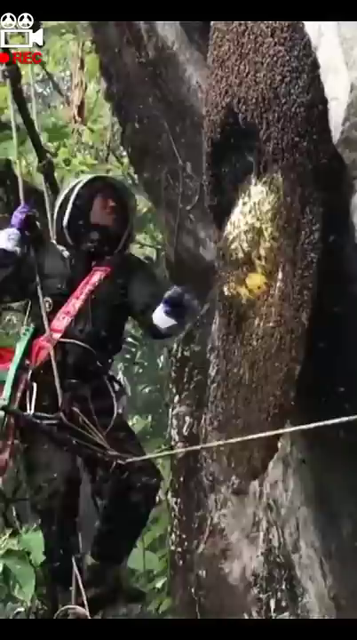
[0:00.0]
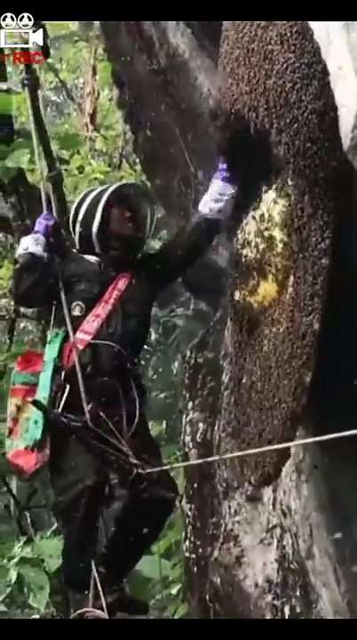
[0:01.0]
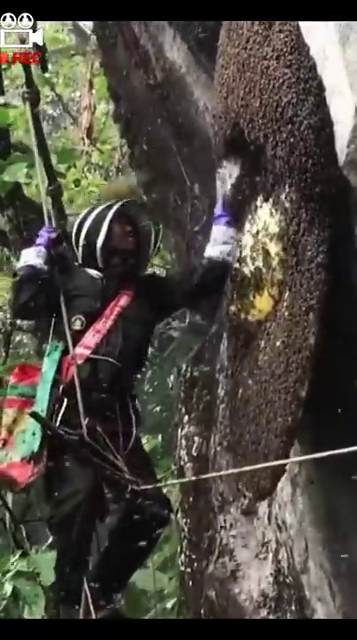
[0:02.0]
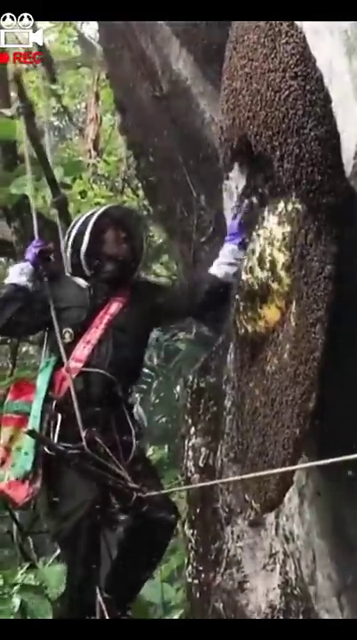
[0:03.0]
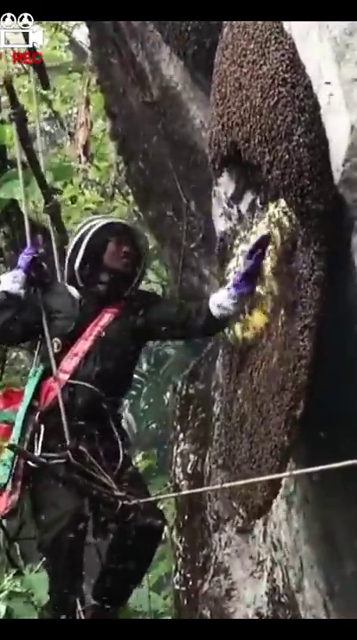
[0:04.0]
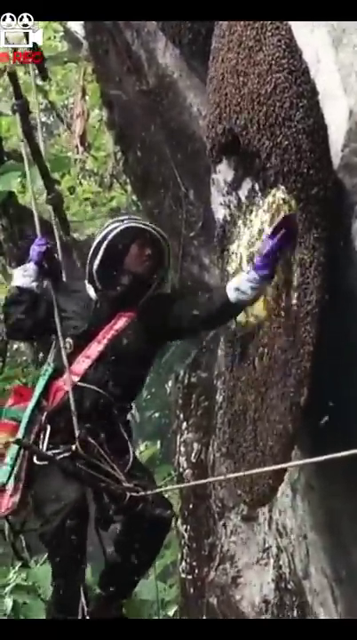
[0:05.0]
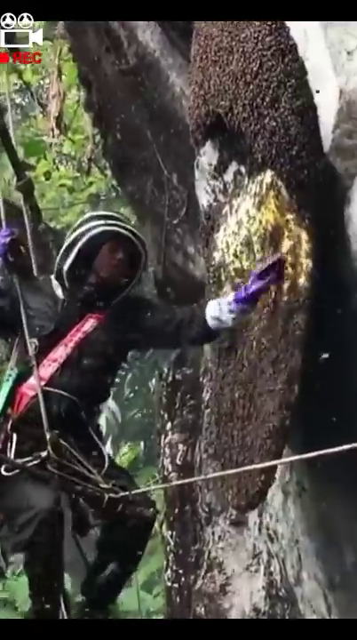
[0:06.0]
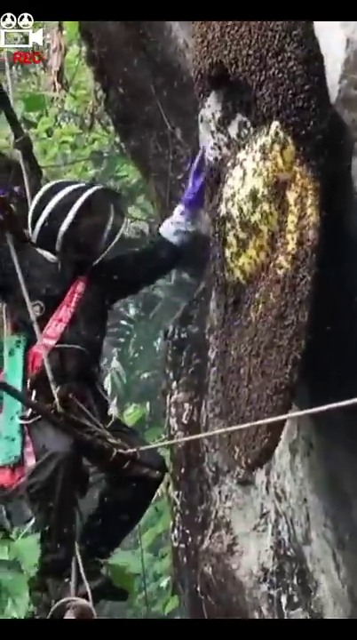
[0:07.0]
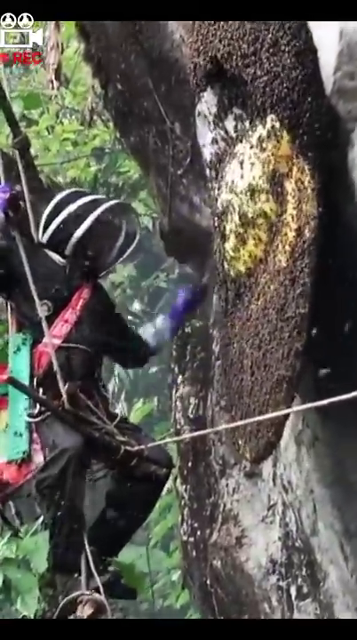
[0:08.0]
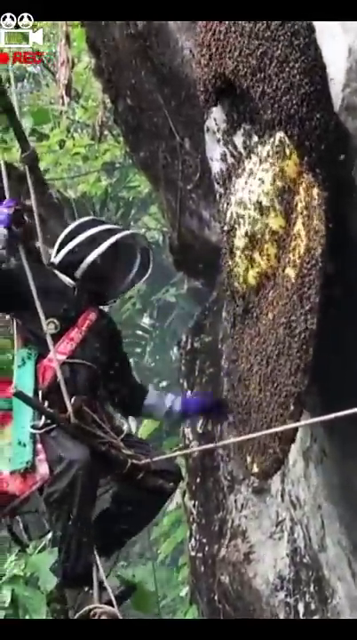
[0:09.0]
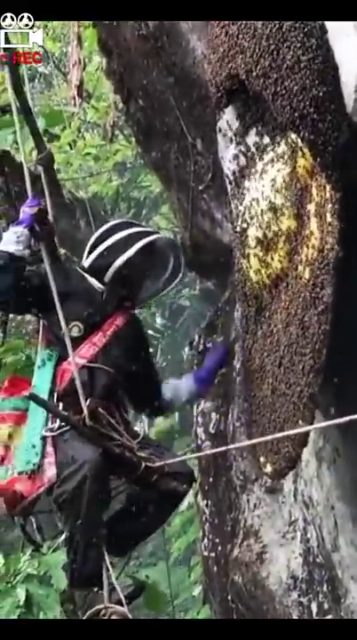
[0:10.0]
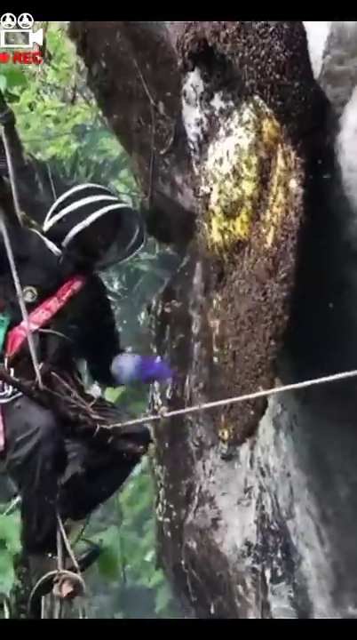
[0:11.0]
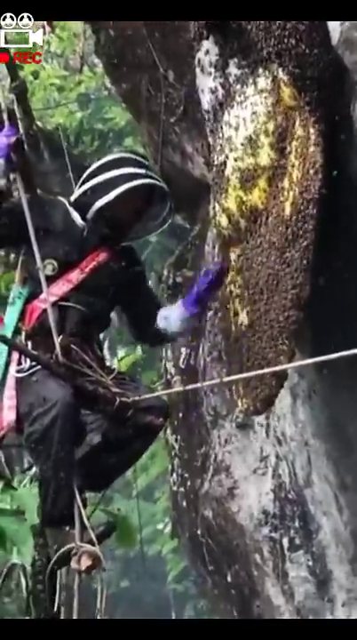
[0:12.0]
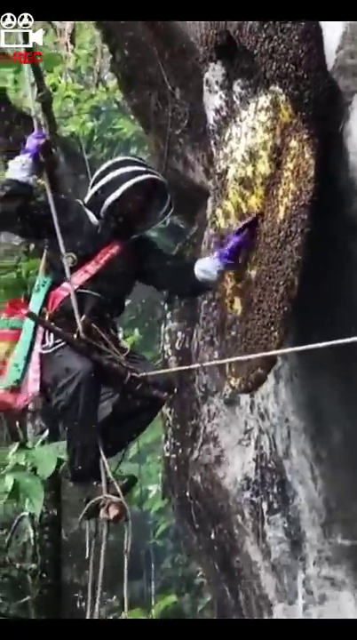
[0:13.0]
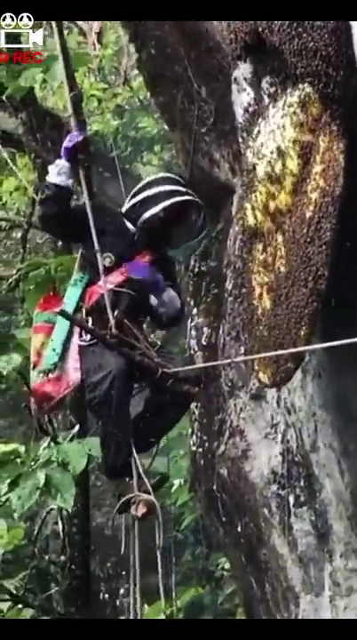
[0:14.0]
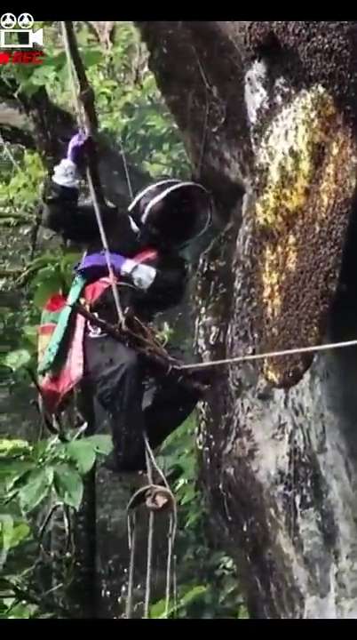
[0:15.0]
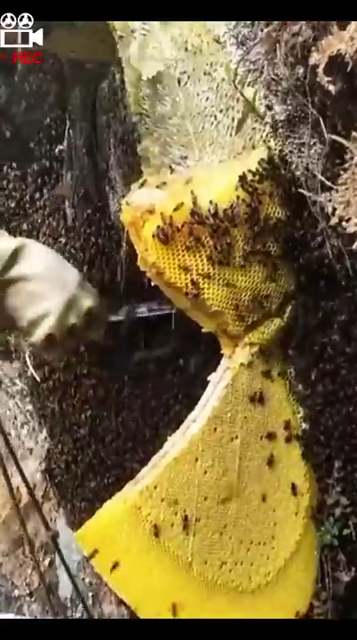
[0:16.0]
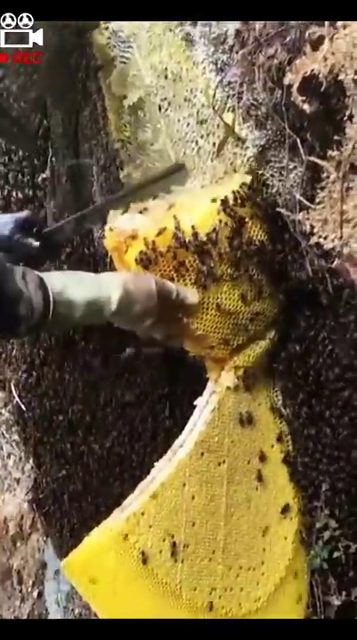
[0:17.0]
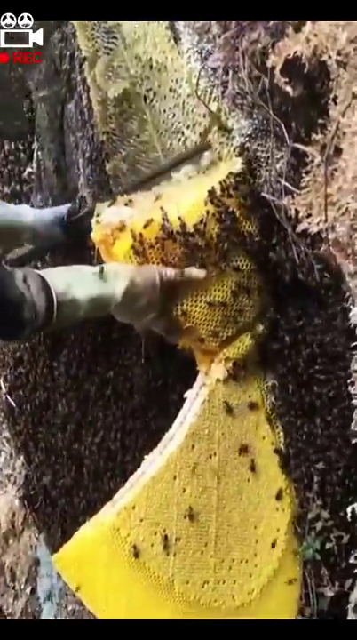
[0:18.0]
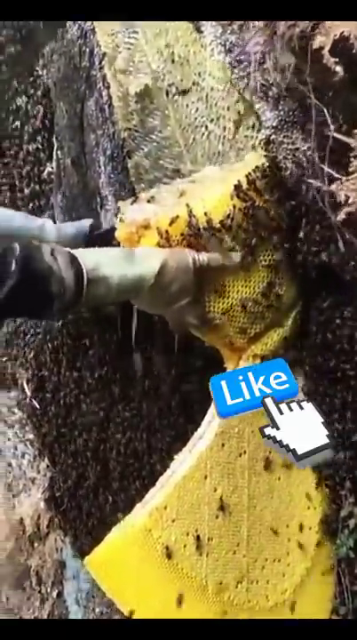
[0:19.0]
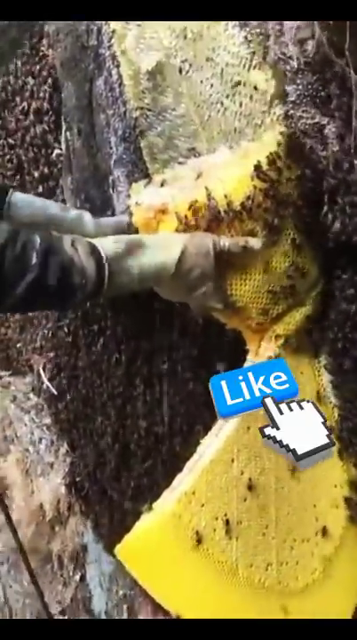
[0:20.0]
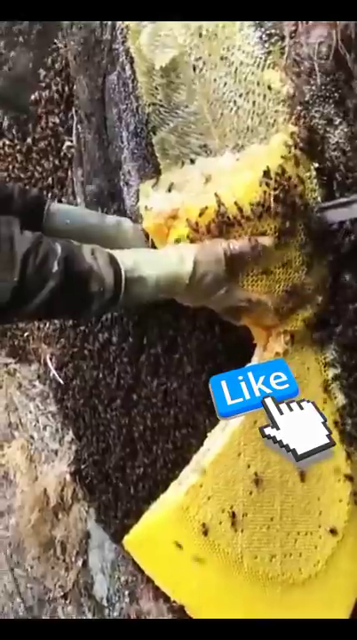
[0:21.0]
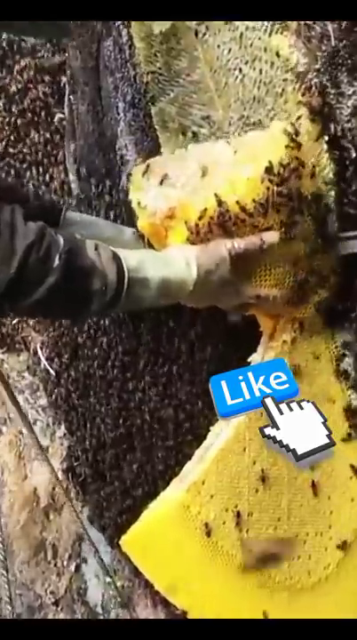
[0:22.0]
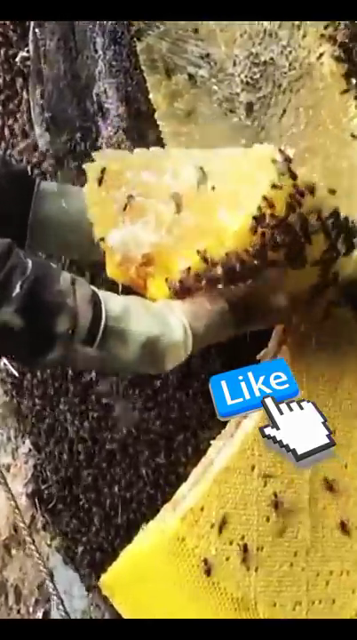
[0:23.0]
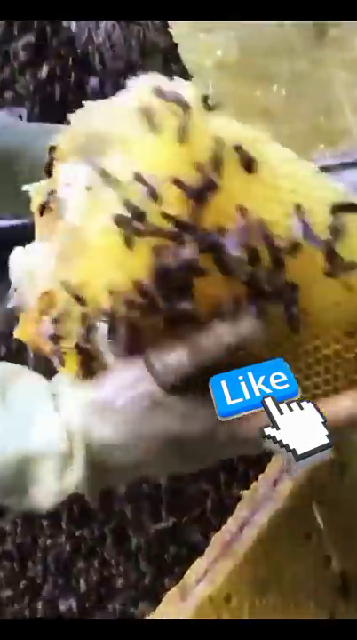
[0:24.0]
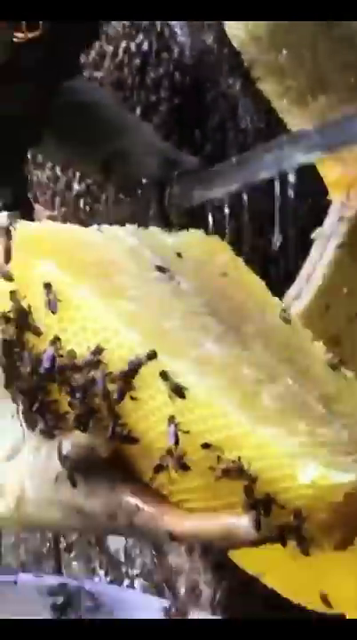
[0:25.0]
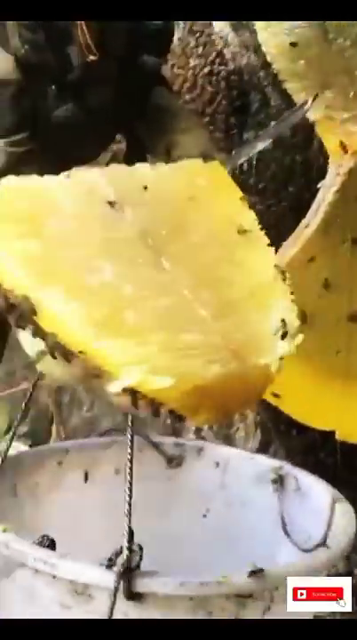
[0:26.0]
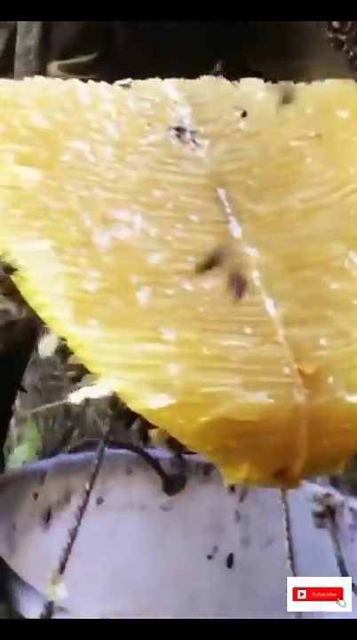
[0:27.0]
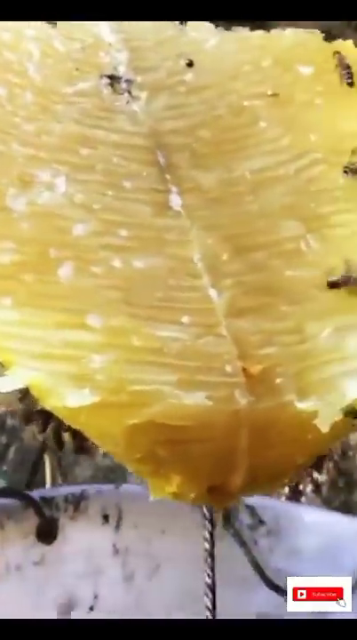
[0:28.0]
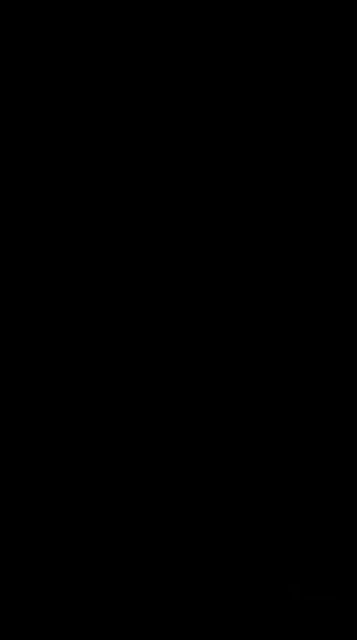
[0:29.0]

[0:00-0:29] A beekeeper is hanging from a tree. Something brown and black is visible, and bees are hanging on it. The bees are swiped down, knocking all of them down from the tree. There is one yellow beehive. The beekeeper is holding a knife, the yellow beehive is hanging down, and the beekeeper is putting the mound into a pail that has been brought up to the large beehive.